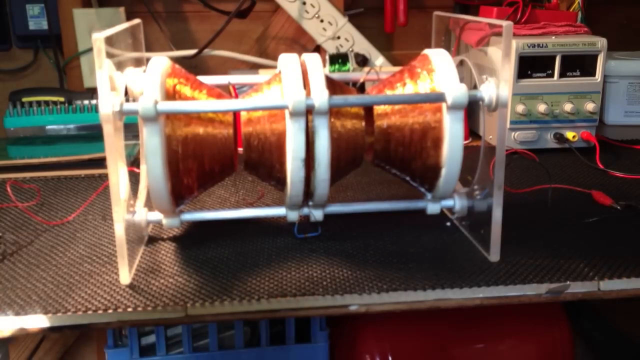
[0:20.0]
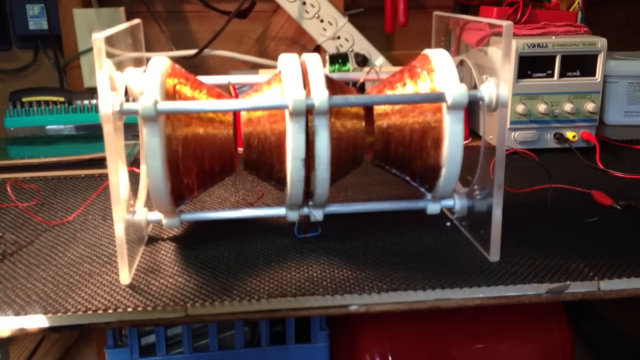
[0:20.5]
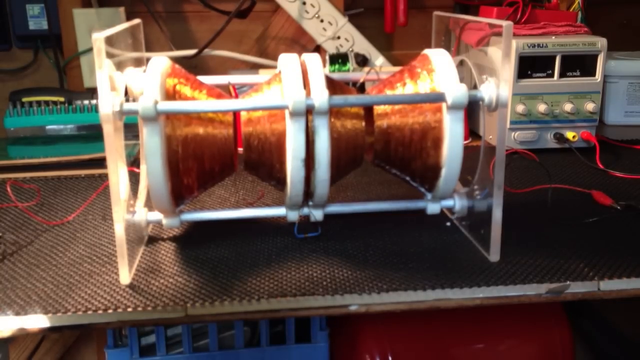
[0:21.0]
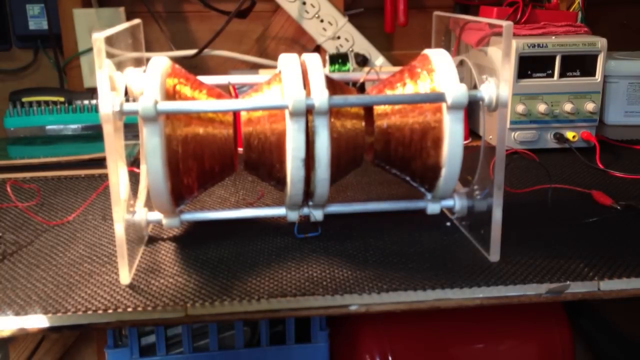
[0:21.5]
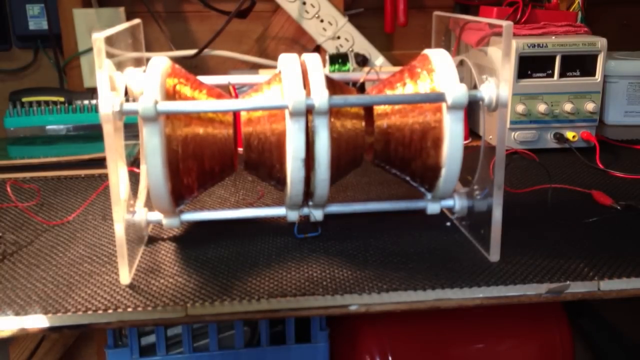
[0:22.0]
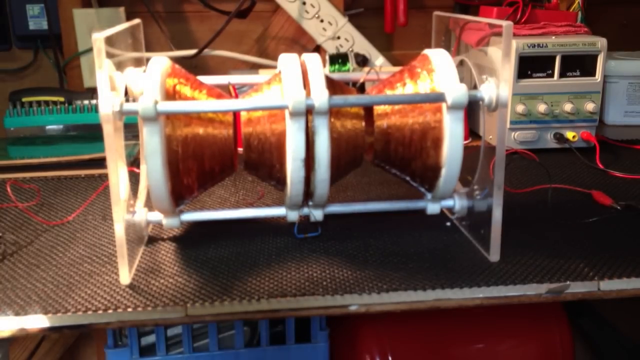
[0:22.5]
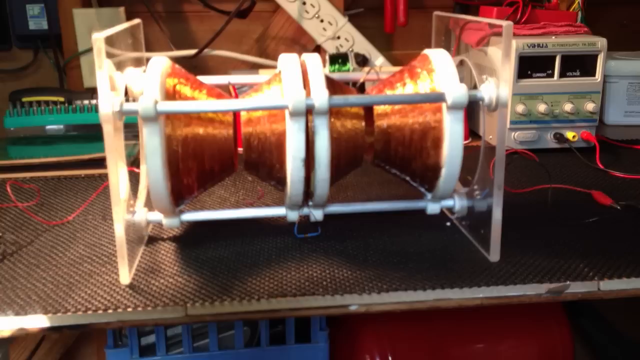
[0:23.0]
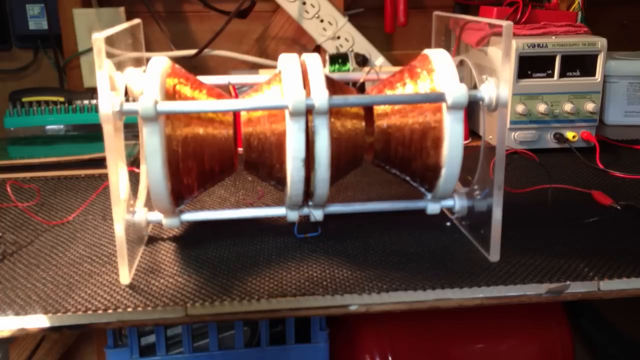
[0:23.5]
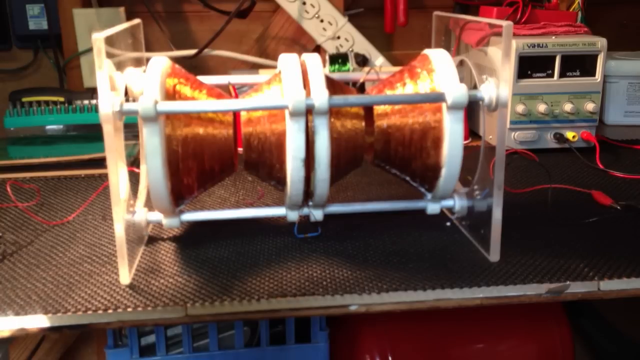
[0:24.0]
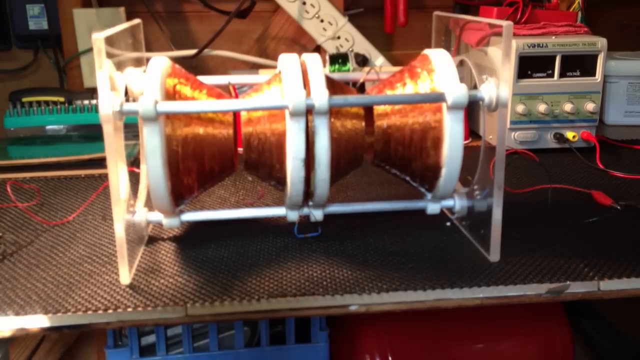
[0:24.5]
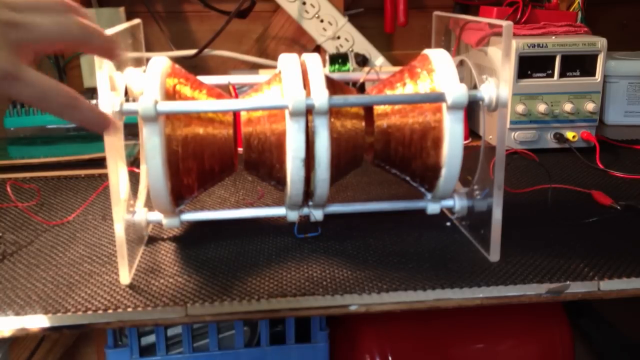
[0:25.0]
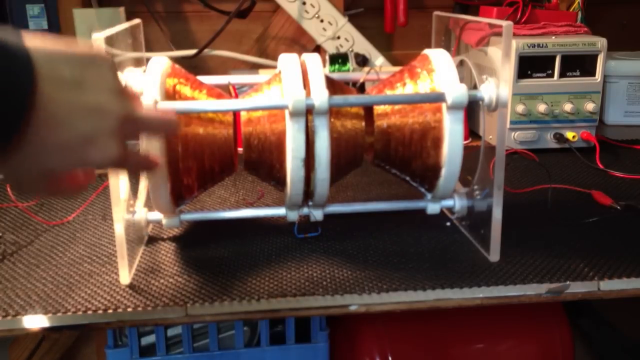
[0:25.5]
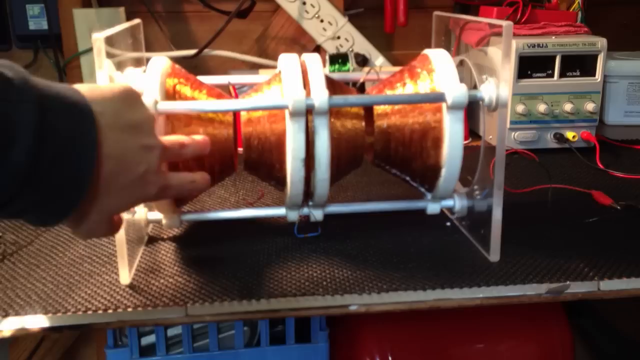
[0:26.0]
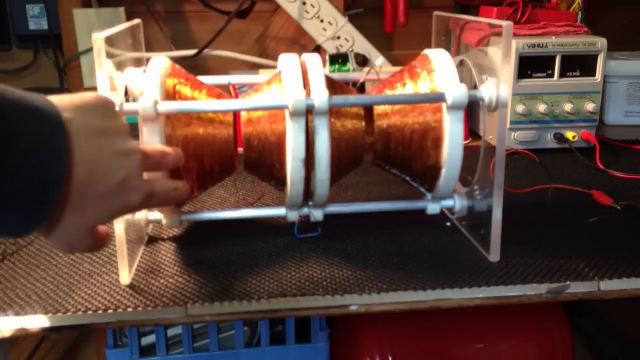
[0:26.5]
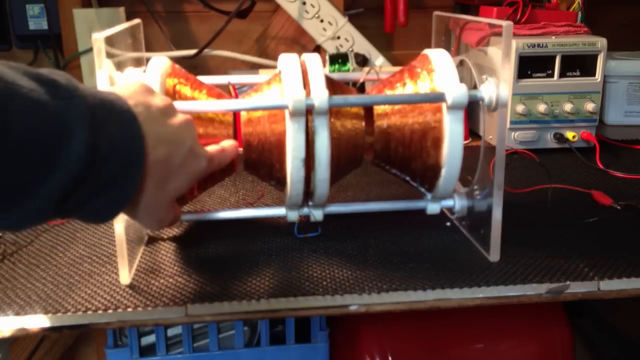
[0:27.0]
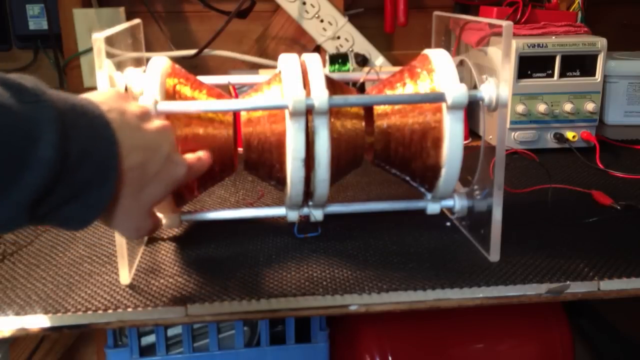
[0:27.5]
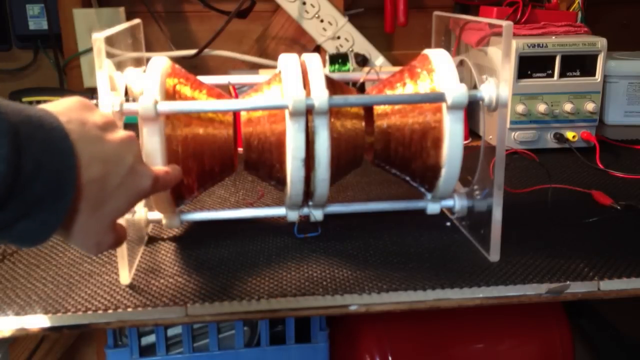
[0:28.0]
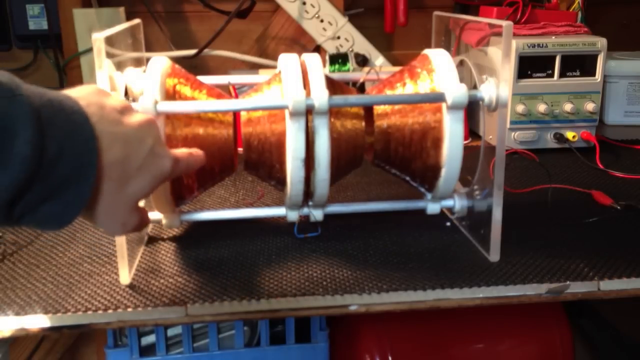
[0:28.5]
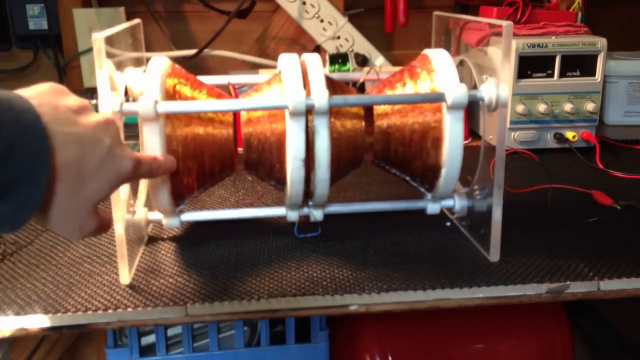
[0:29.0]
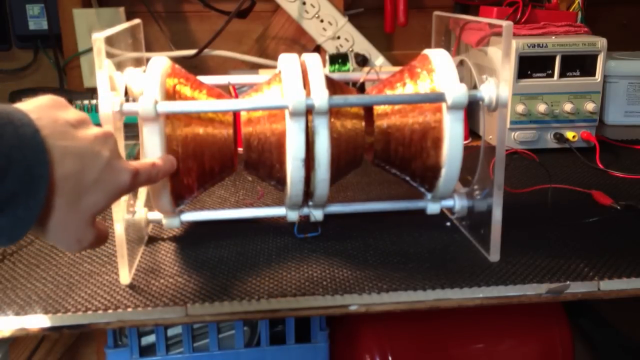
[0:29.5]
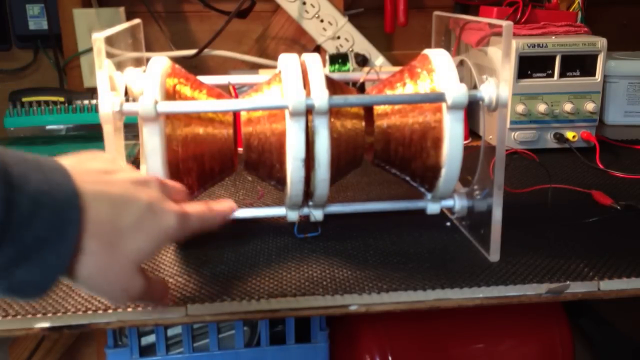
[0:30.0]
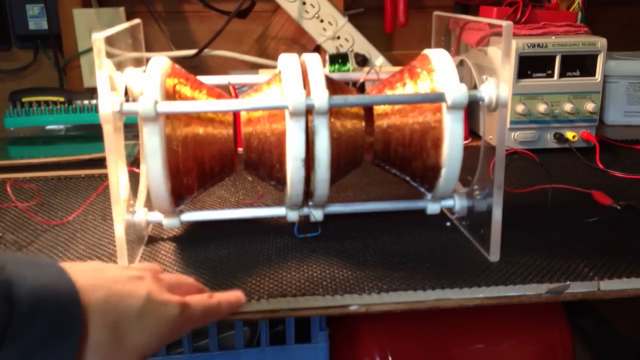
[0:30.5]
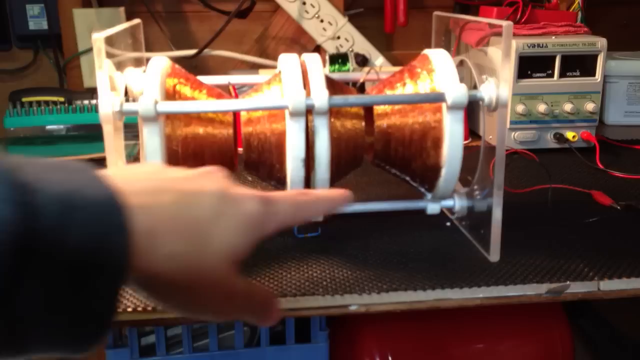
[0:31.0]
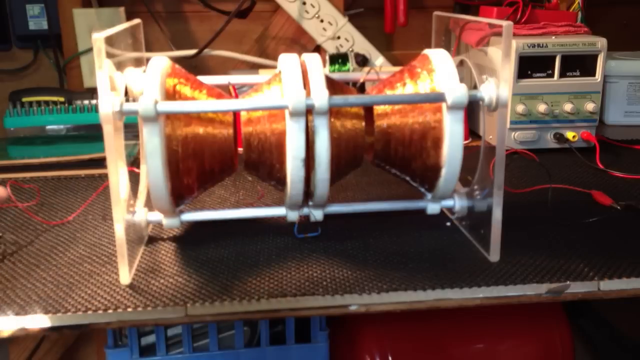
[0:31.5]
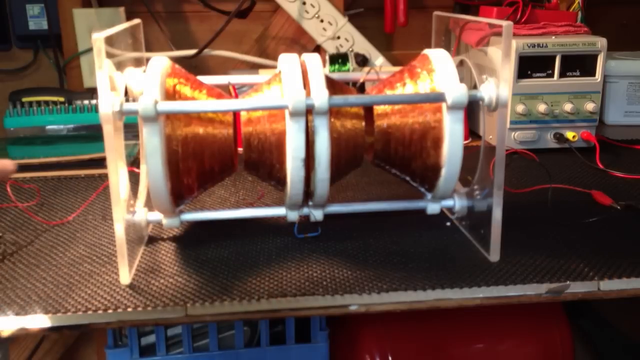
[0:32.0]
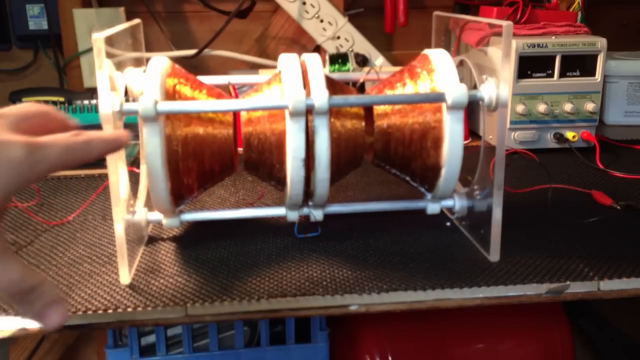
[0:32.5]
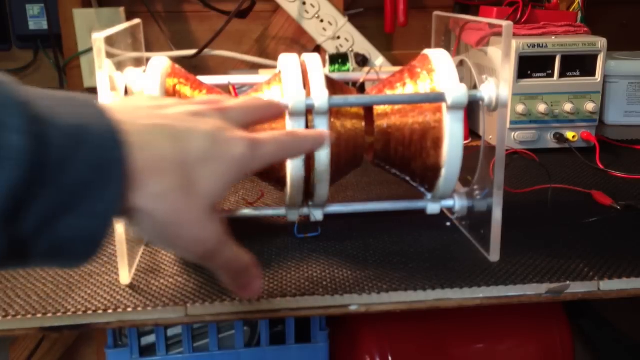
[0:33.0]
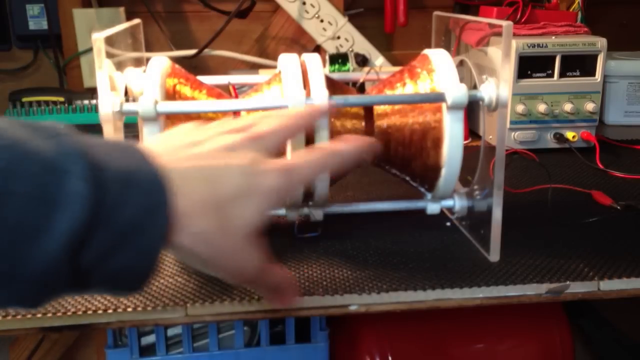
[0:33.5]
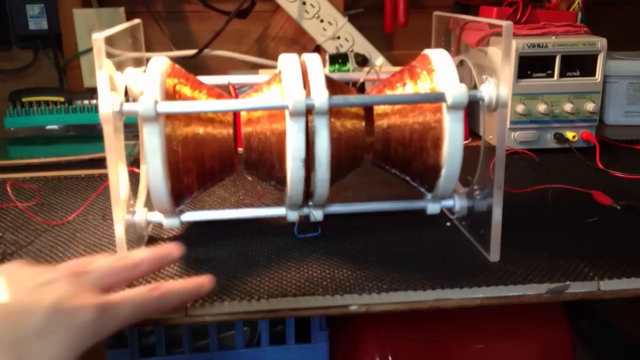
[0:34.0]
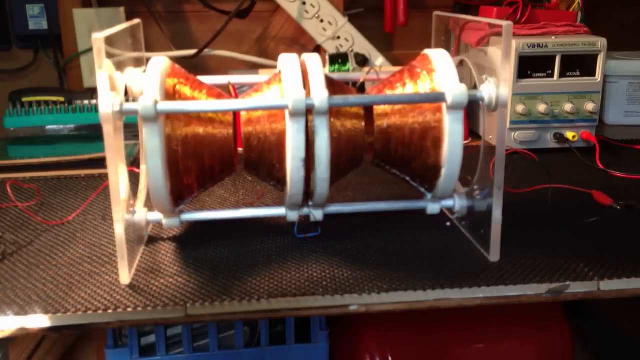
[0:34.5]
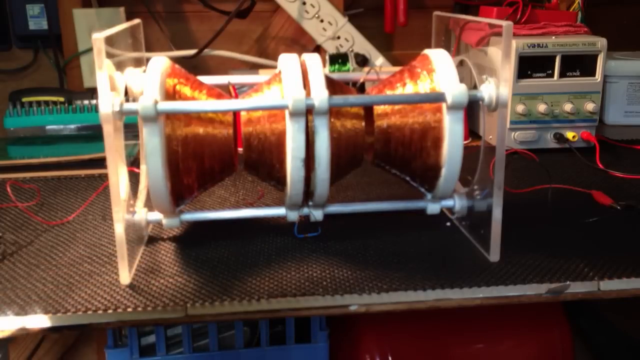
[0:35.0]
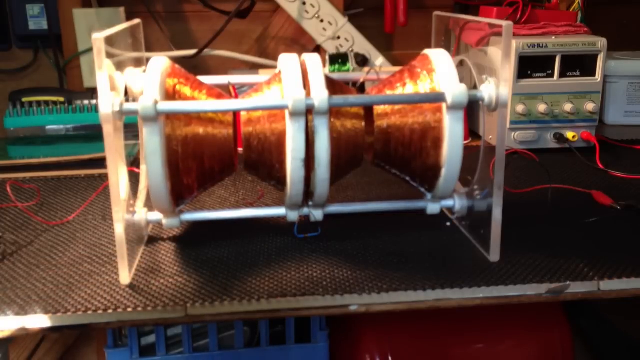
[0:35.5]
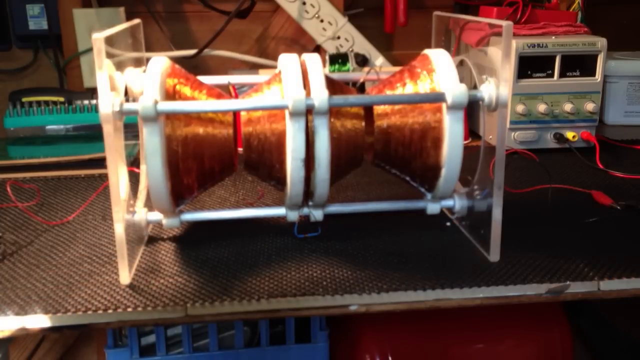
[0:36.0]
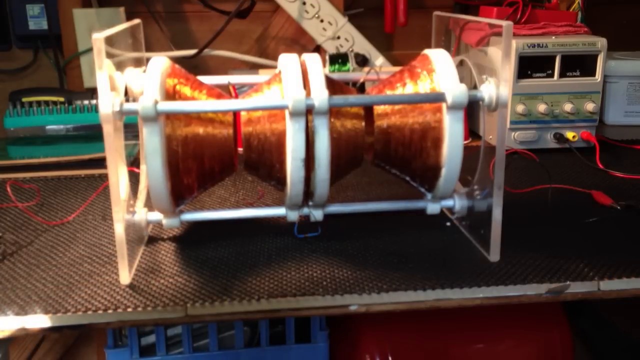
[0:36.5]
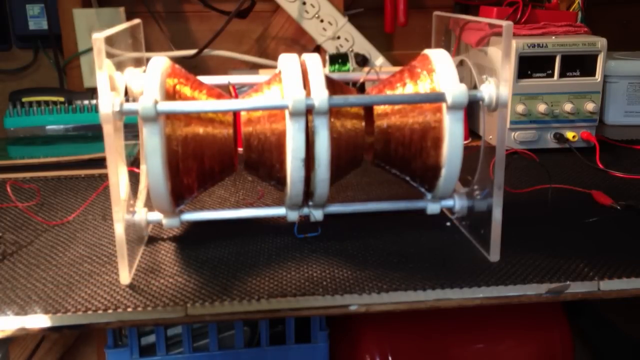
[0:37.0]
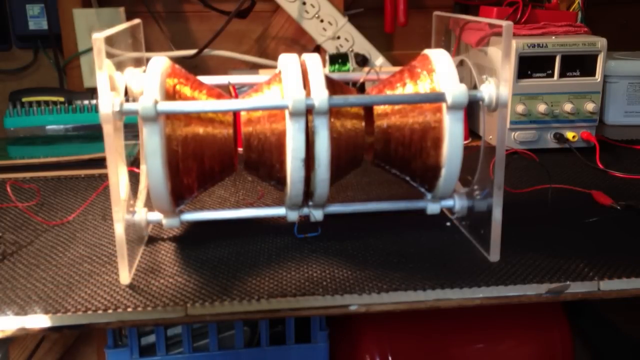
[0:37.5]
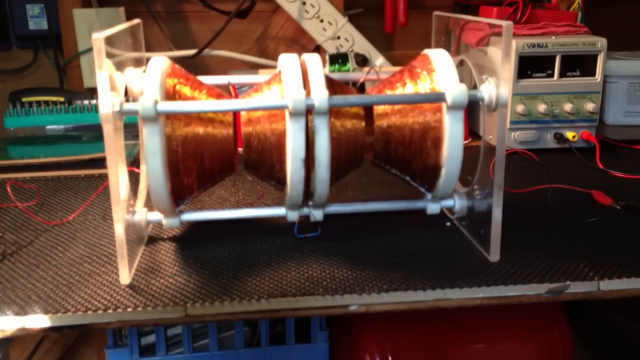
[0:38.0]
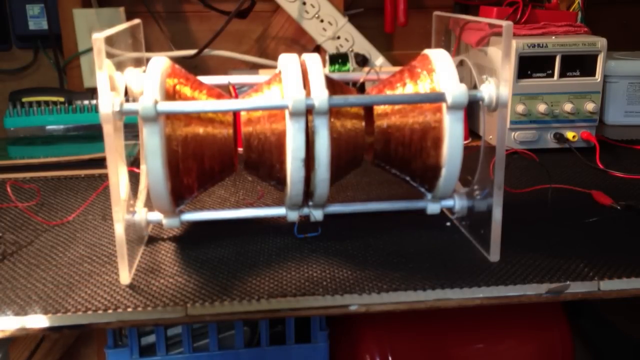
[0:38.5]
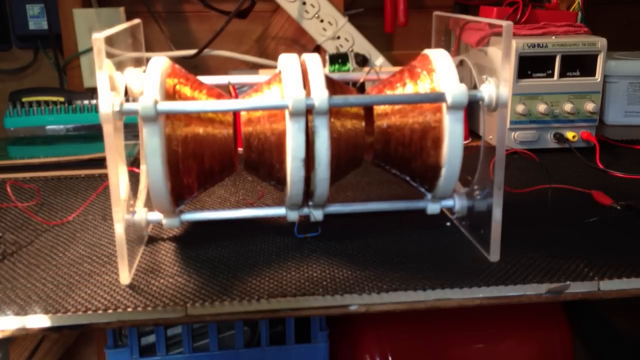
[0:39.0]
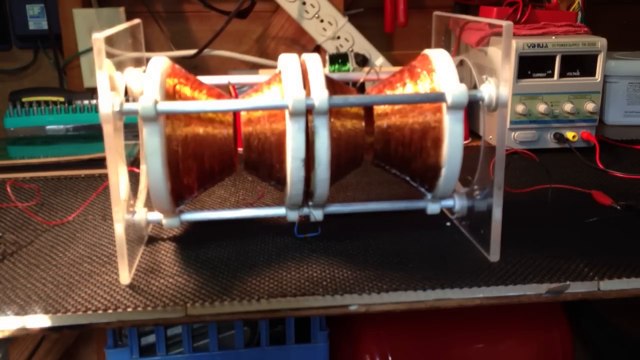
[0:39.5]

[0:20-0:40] In a static shot, a person's hand comes in from the left-hand side of the screen, pointing two fingers, including his index finger, toward the metal copper coil. His index finger touches the inner part of the coil and moves toward the outside, pointing to the outside. He then moves his finger to the centre of the object and moves his hand away. His hand hovers in front of the object again before moving away. There is lighting above, various bits and pieces are in the background, and the wall appears to be made of wood.